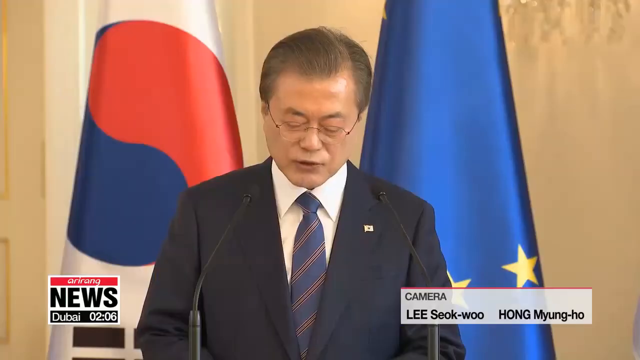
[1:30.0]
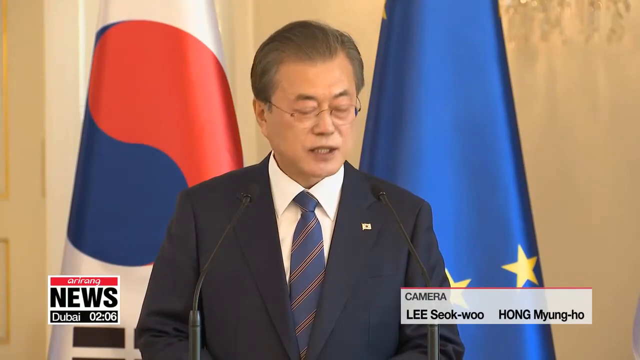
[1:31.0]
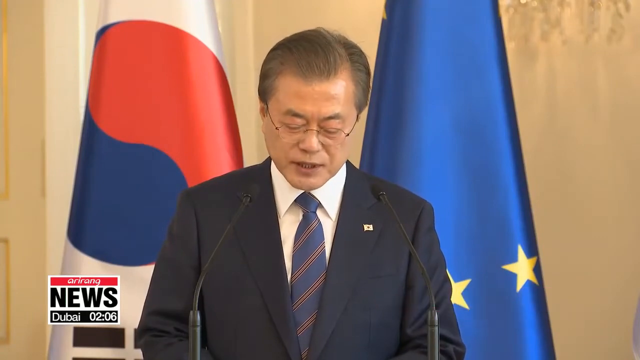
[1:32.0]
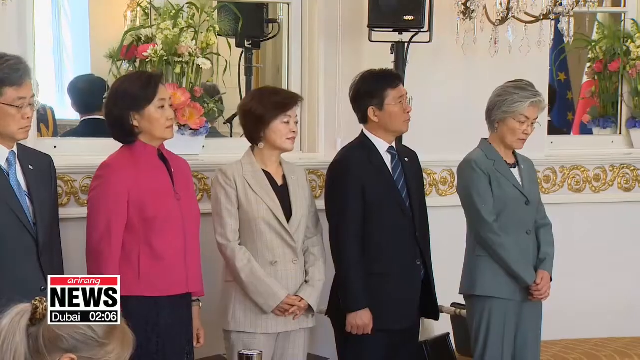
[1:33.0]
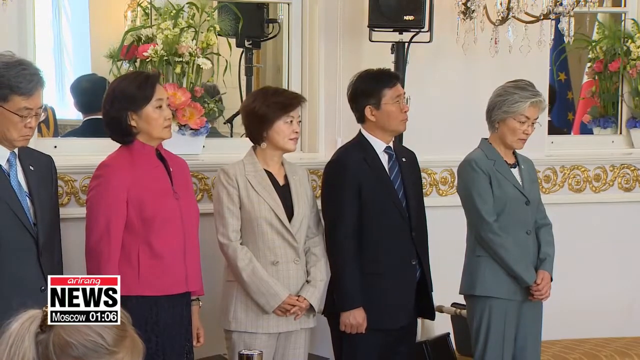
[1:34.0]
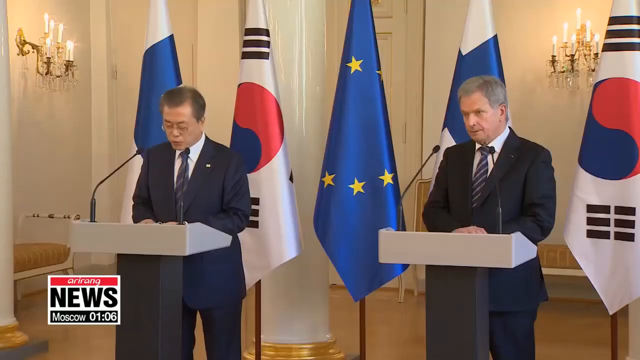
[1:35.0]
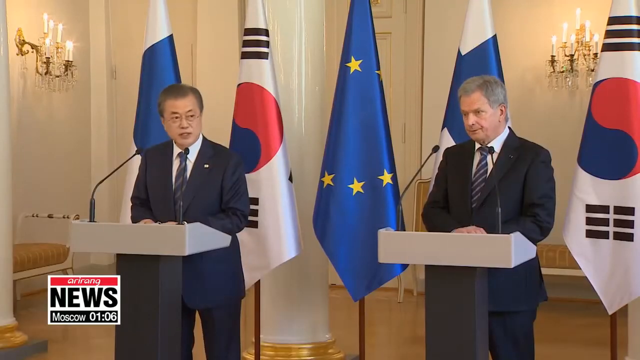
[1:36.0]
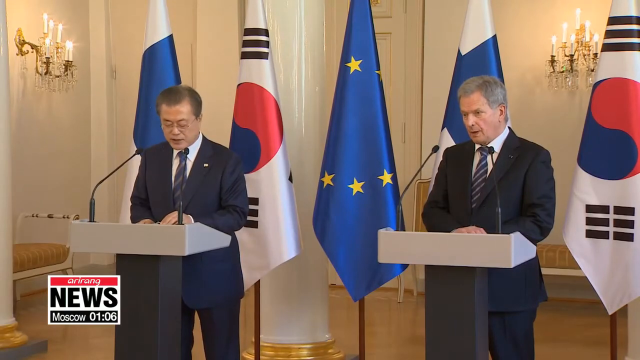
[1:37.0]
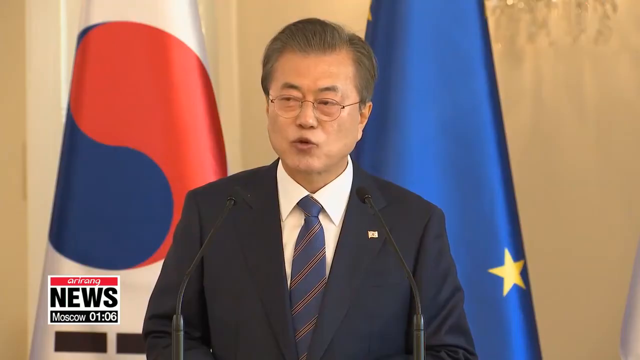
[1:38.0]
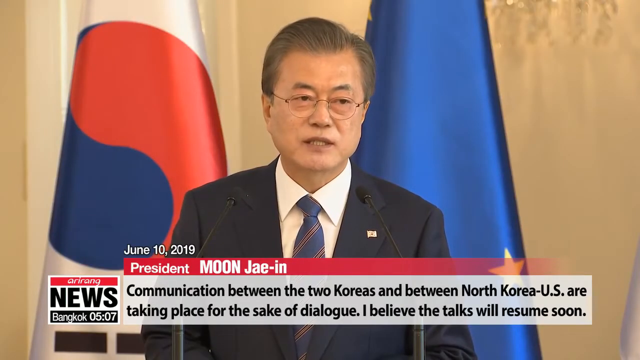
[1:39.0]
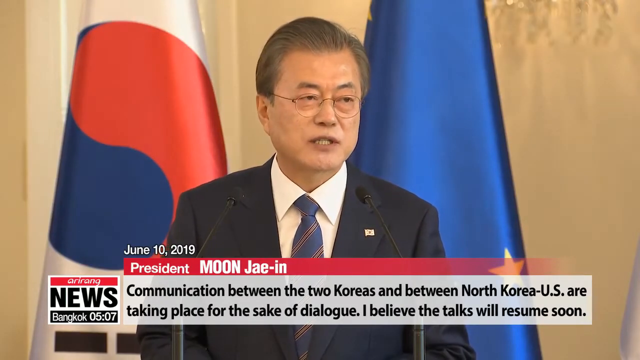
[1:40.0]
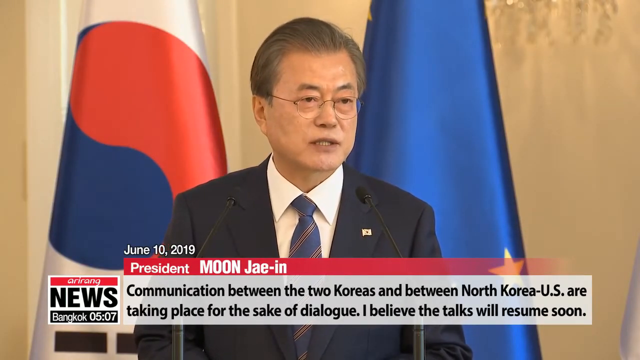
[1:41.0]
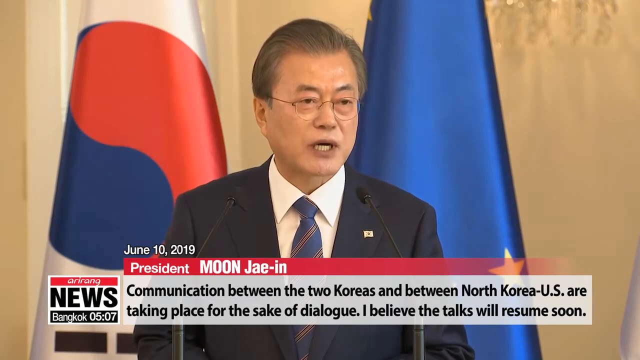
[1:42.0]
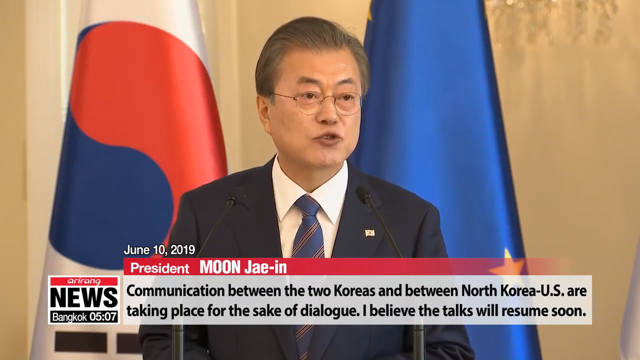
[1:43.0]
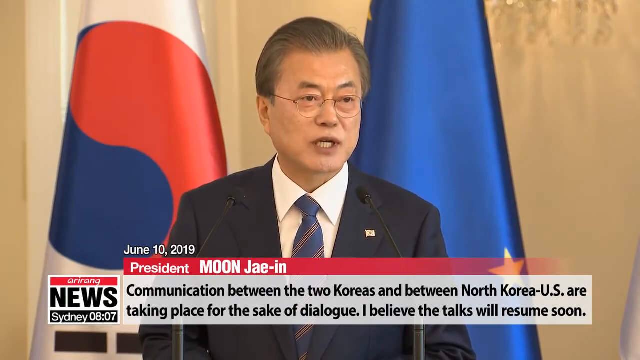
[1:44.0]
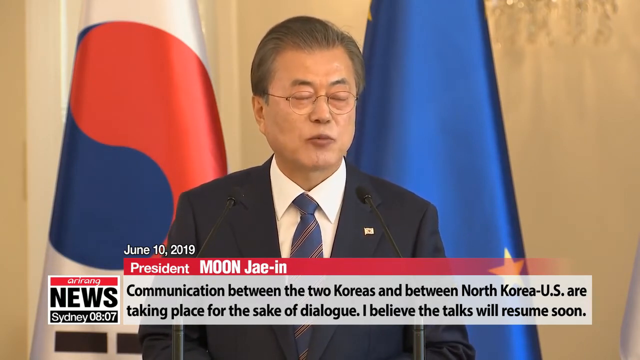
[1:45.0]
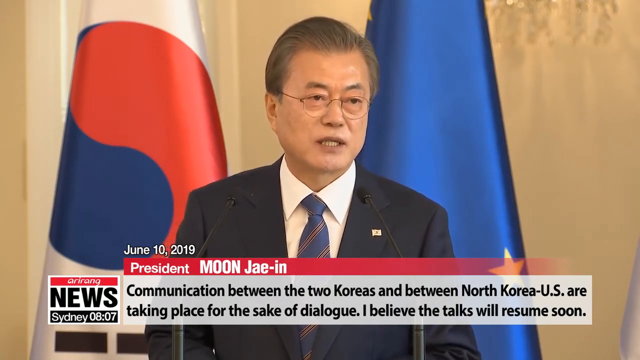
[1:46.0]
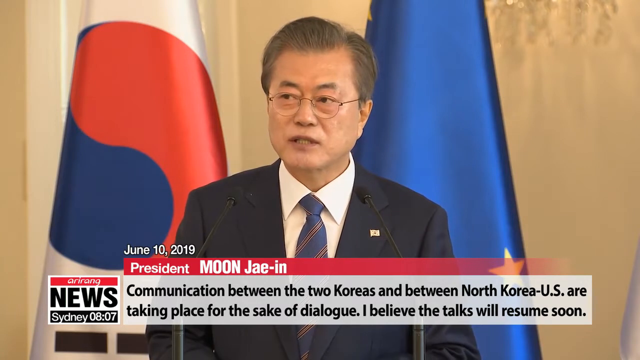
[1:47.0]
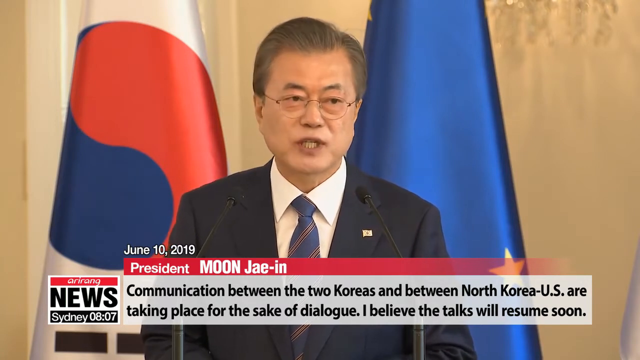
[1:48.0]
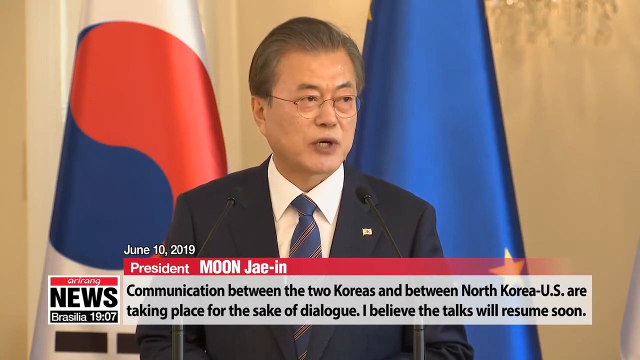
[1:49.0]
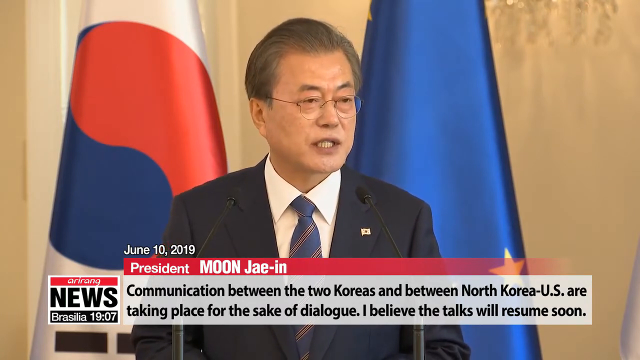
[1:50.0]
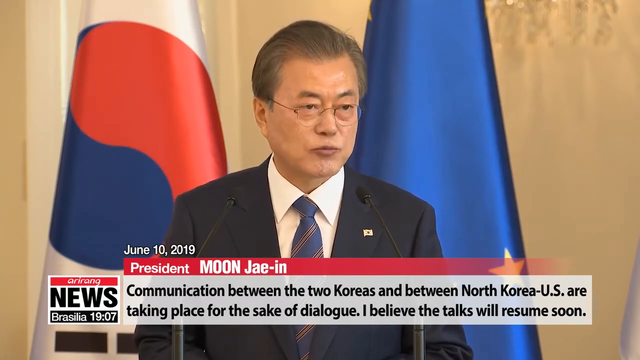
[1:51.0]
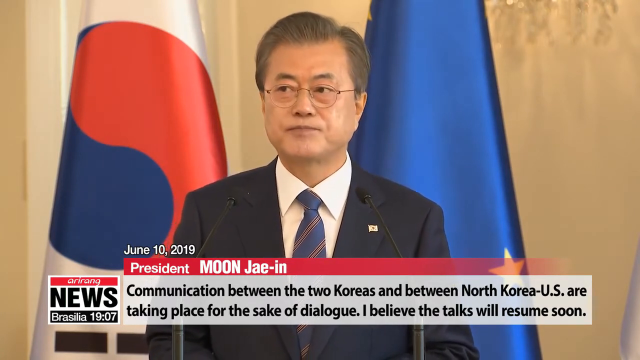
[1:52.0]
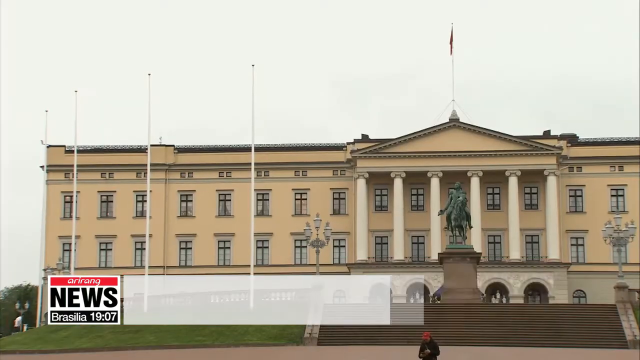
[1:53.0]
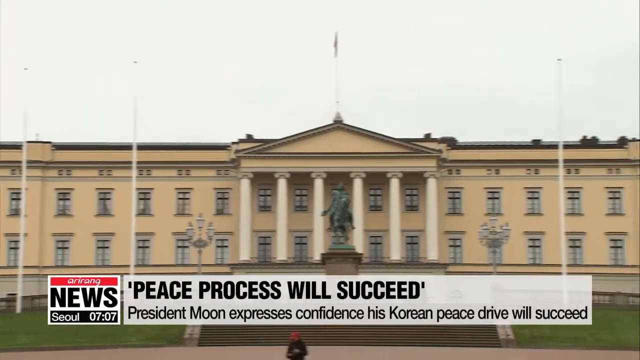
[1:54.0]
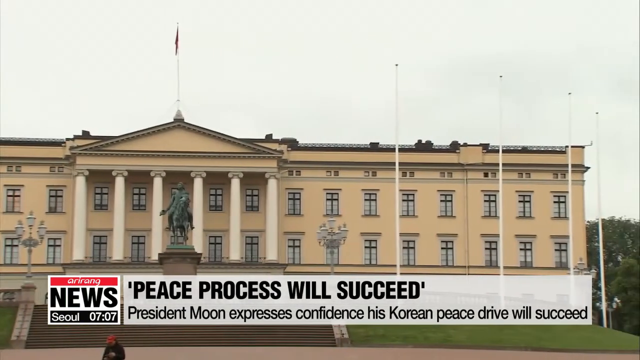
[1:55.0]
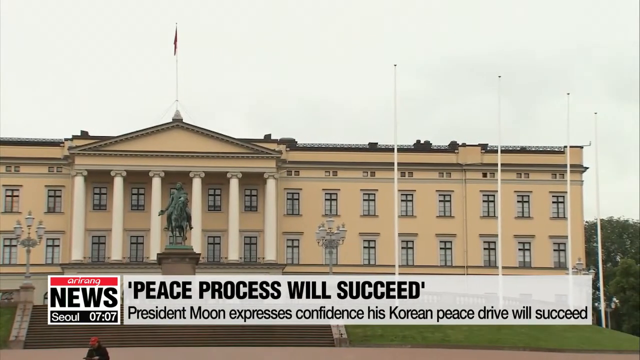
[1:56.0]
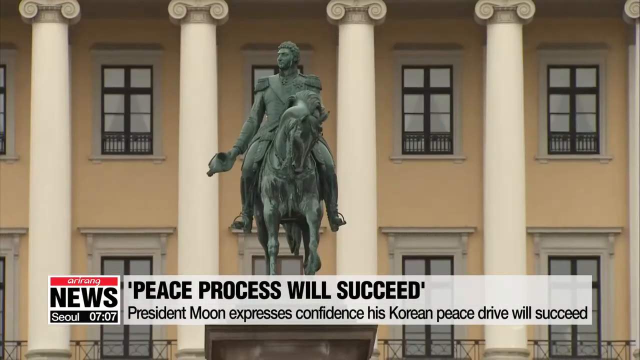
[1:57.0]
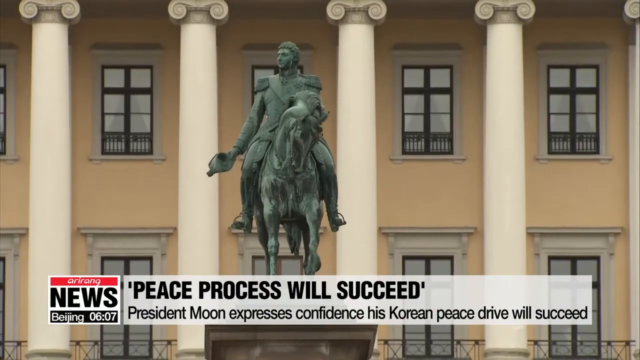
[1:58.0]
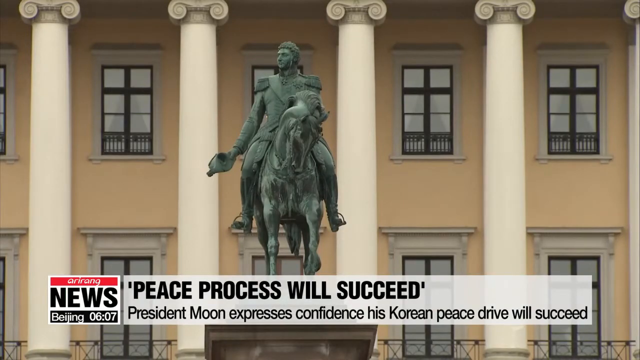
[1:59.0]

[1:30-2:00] A man stands addressing the people. On the road, three women and two men are lined up. The first woman has gray hair and eyeglasses and wears a gray suit jacket. The man behind her wears a black suit, white shirt, blue striped tie and eyeglasses. The woman behind him wears a nude suit skirt with a black inner and has short brown hair, and the woman after her wears a black gown with a pink suit jacket. There is also a man in a black suit with a black inner and short brown hair, and a man behind him wearing a black tie and a white shirt.